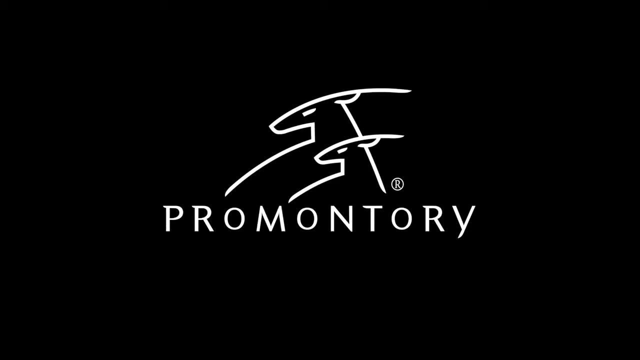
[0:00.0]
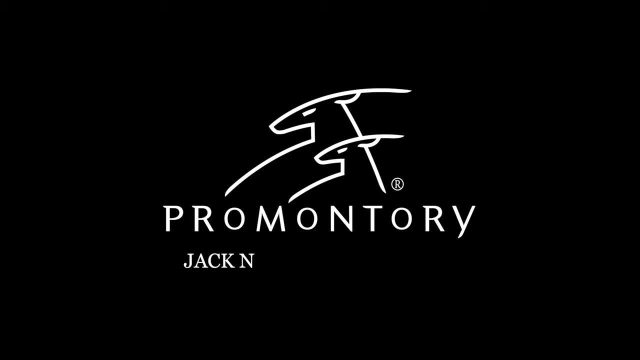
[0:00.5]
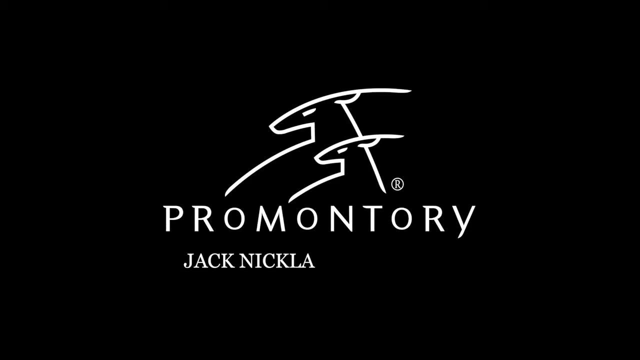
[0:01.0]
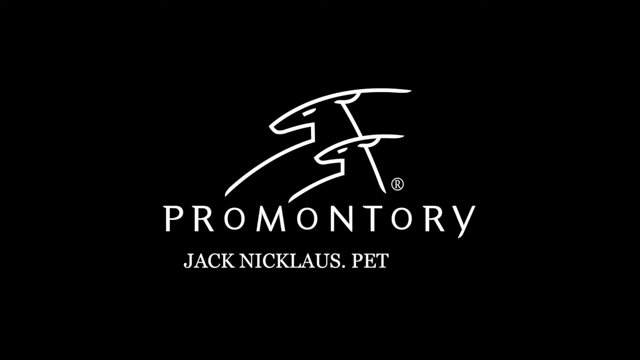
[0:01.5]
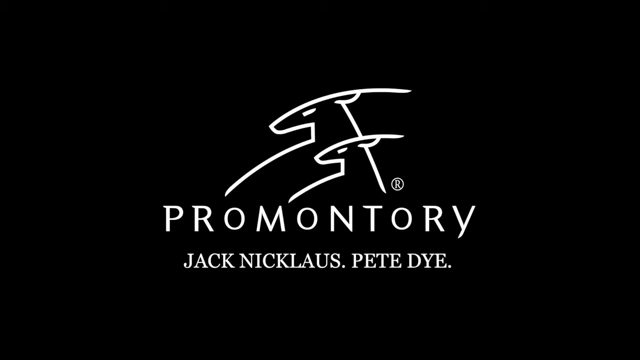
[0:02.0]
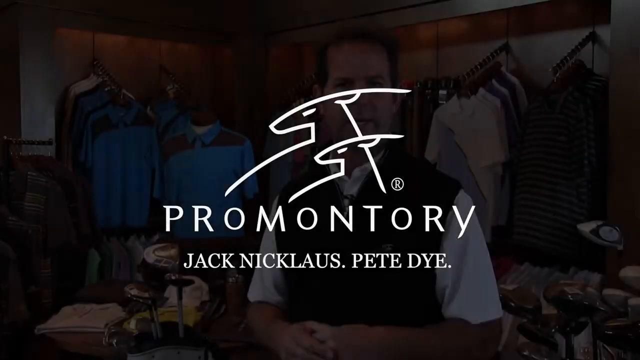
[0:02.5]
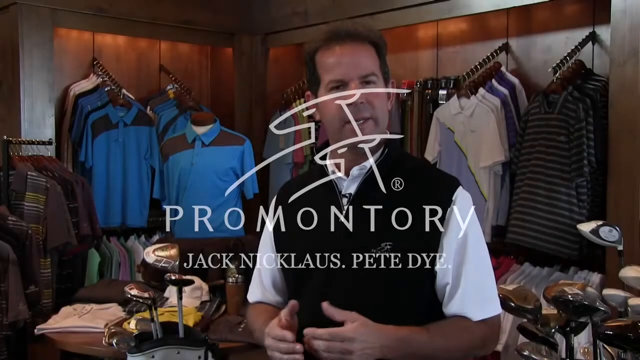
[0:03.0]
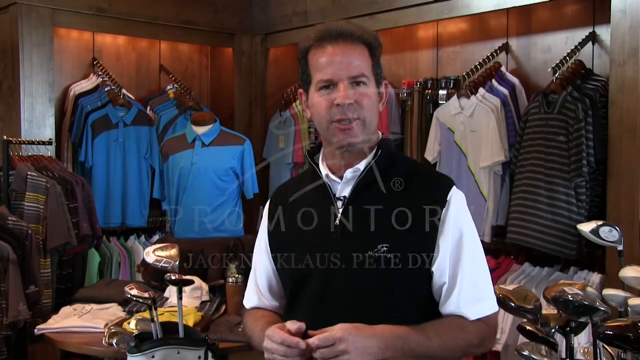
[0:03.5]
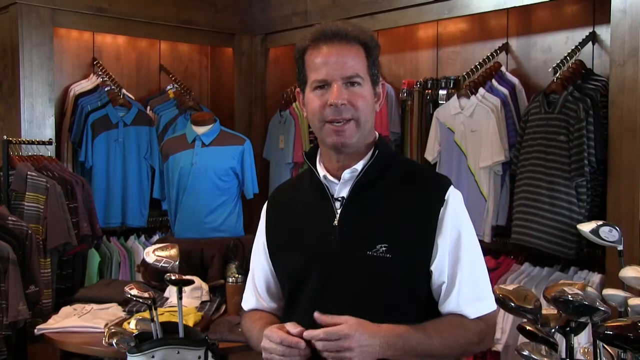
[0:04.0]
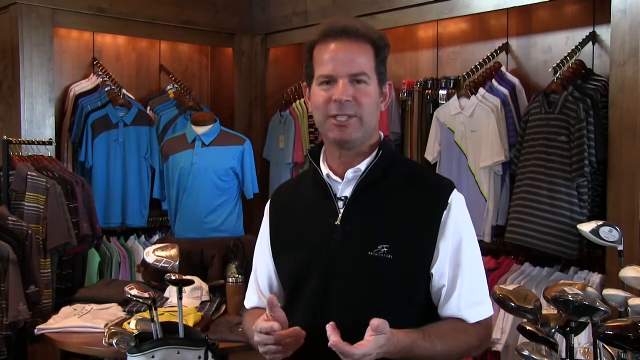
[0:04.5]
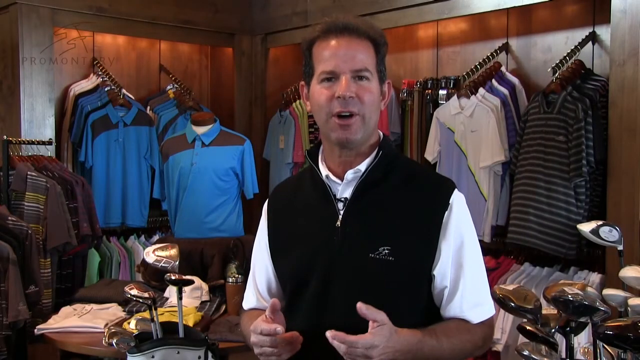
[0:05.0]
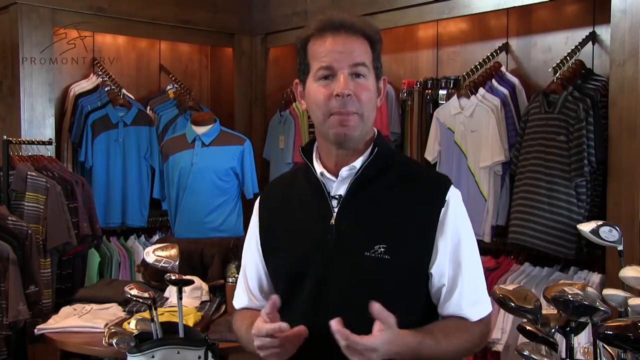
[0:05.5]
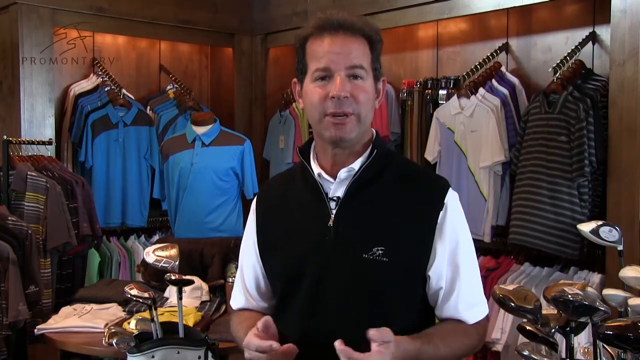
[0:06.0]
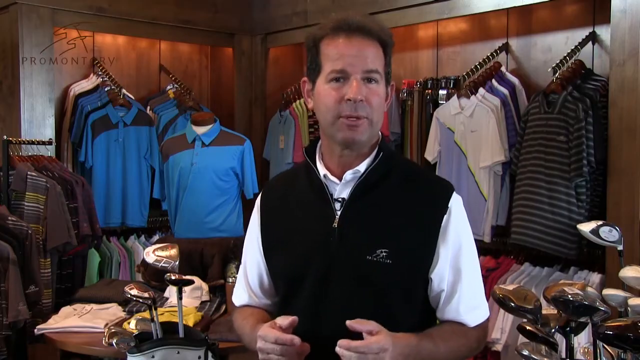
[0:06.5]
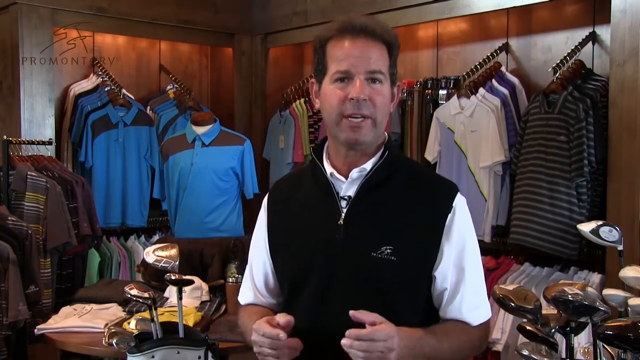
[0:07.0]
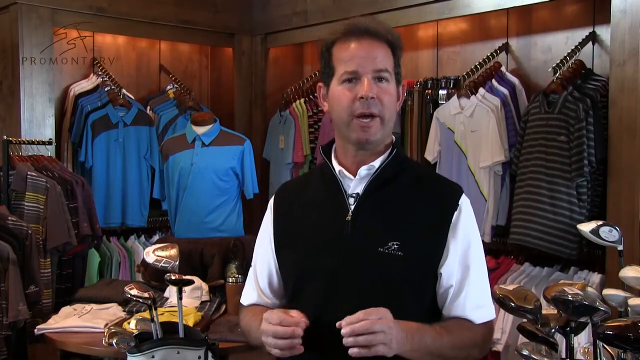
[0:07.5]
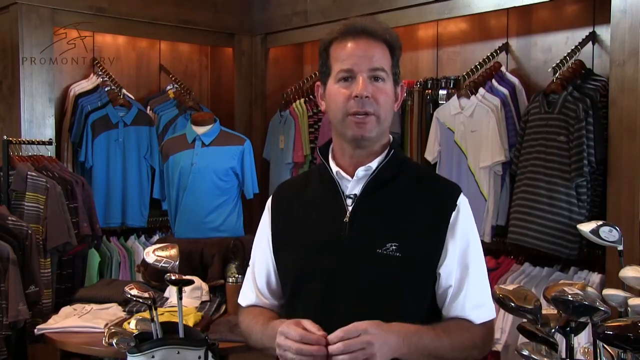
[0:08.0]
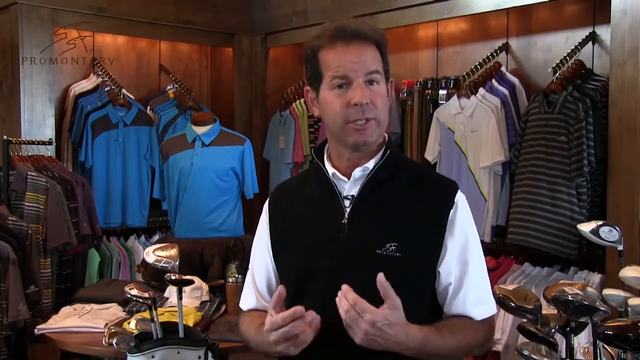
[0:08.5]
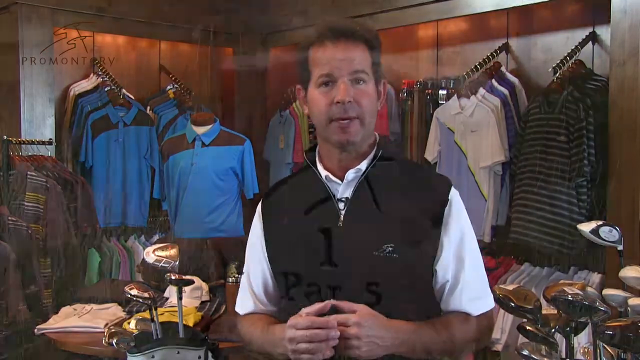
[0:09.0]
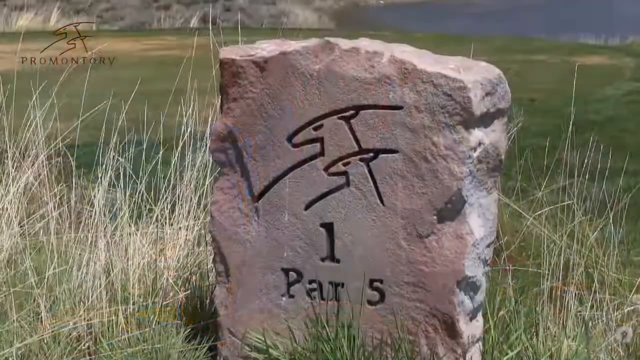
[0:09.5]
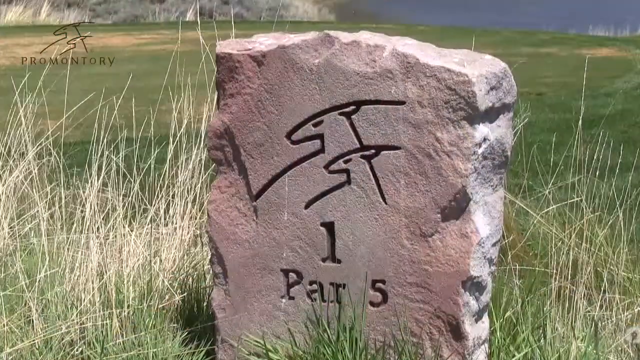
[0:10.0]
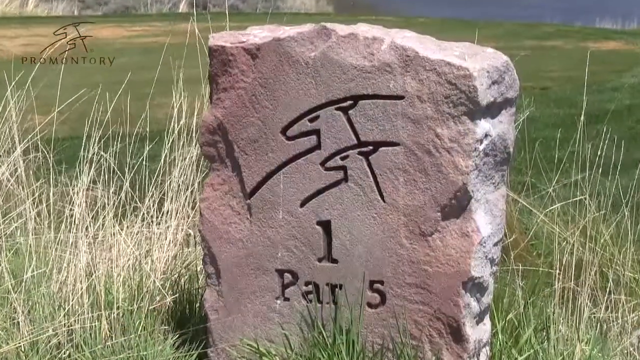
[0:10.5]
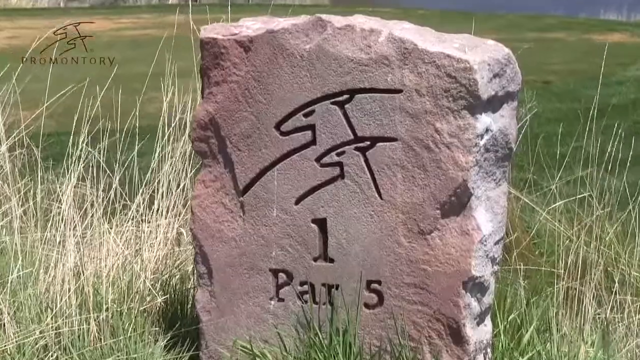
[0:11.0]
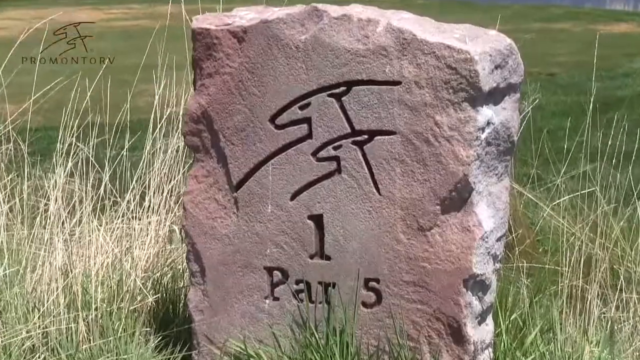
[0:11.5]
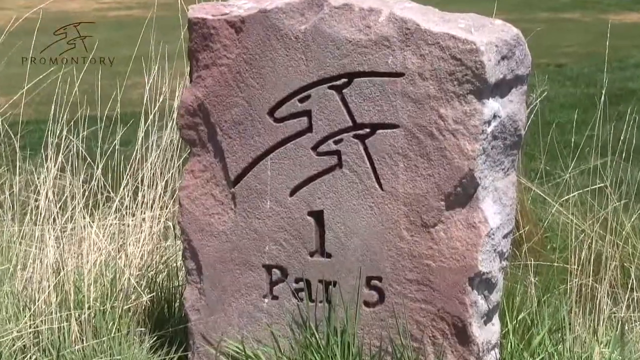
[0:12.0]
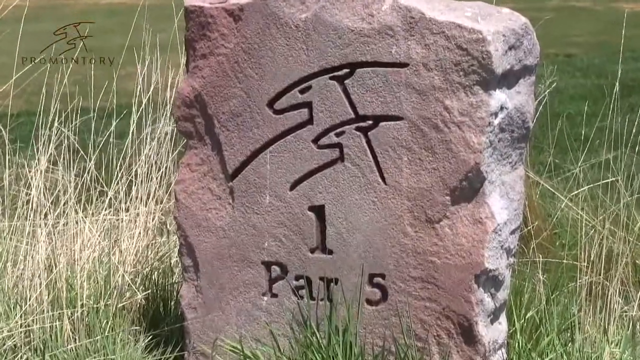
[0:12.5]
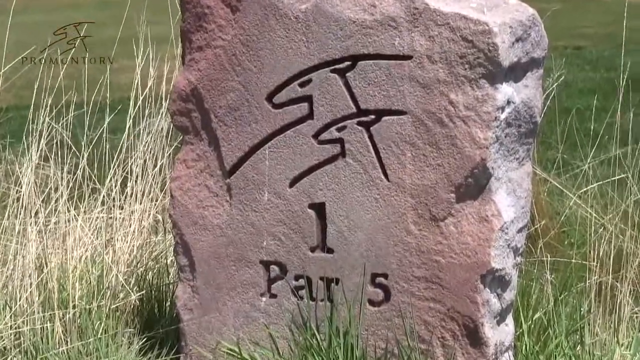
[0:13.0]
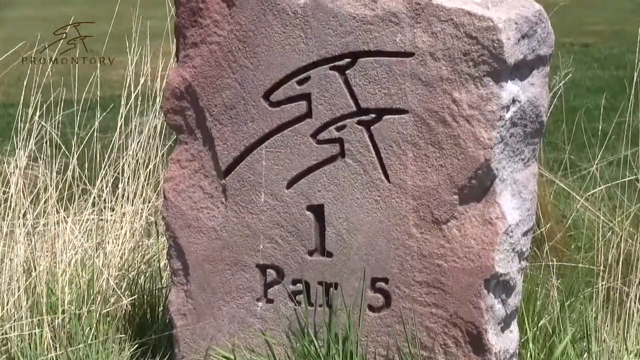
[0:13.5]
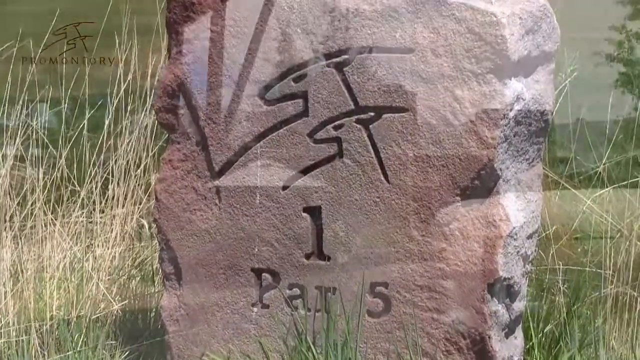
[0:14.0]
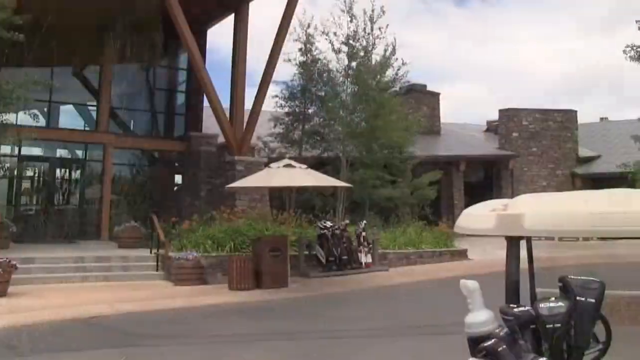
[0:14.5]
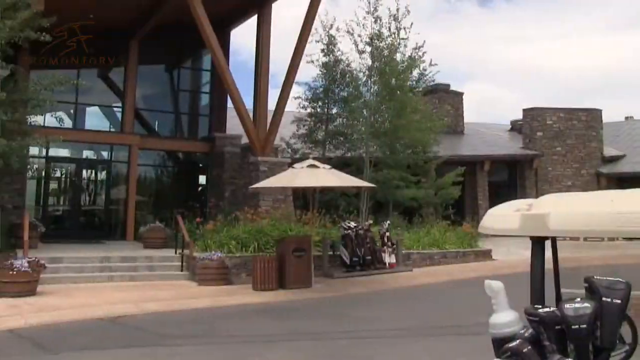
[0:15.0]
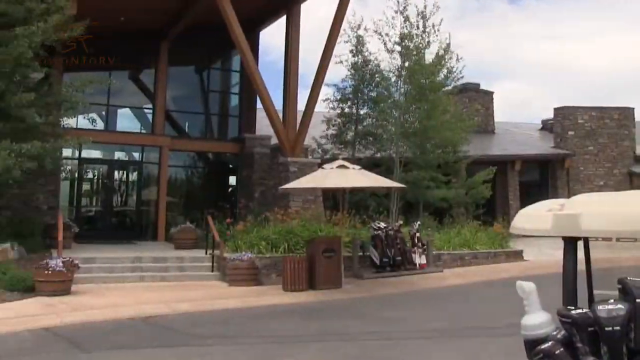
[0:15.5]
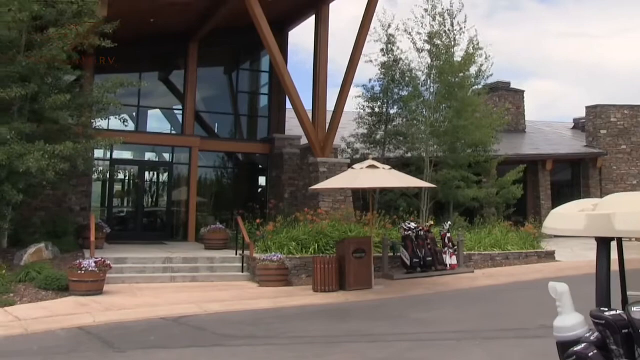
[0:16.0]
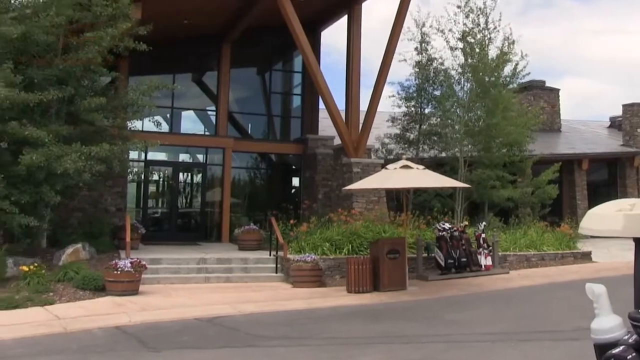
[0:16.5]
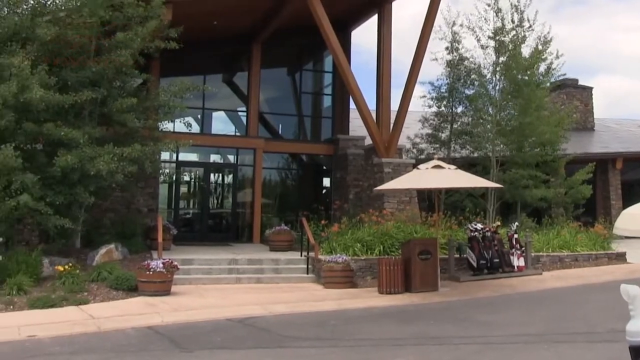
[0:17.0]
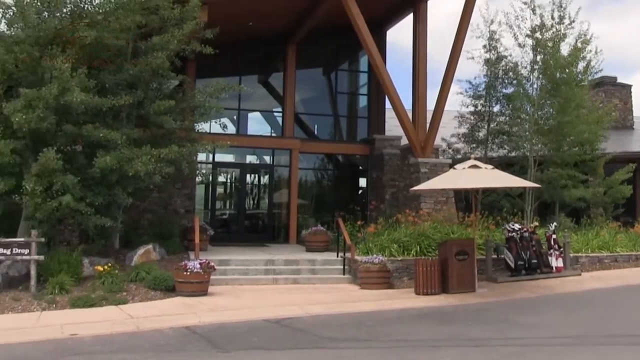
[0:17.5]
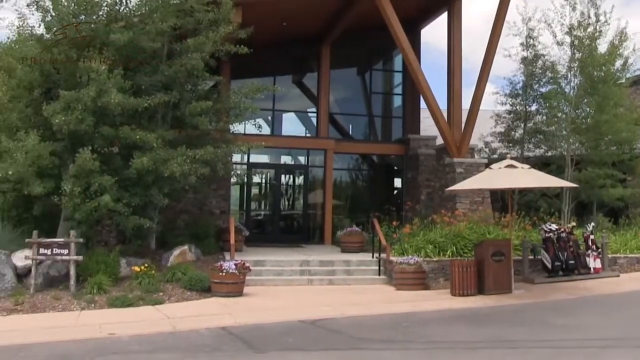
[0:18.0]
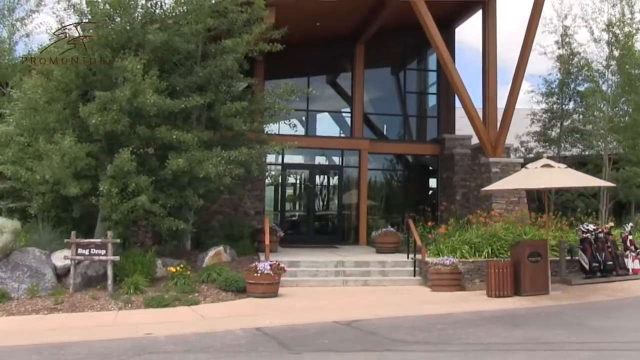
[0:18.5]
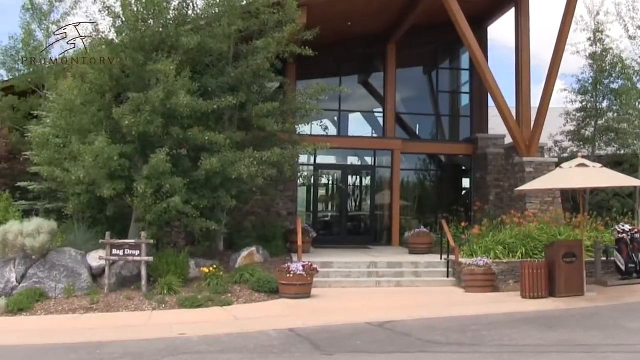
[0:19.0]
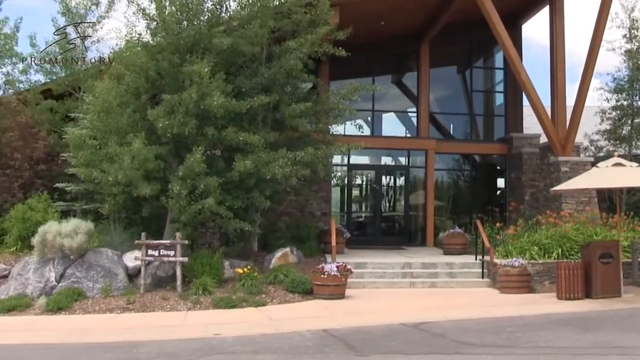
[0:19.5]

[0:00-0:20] A black screen shows white words: "Promontory", followed by the names "JACK NICKLAUS" and "PETE DYE" in all caps, along with white sketched images of what are perhaps two mountain goats. Next, a man stands in what looks to be a golf gift shop. He is Caucasian and wears a black vest and a white shirt. Behind him are neatly arranged golf polos: some blue, some white and purple, and some with black and white stripes. They are lit gently from lighting above and are against a white wall that almost looks like wooden paneling, though it is apparently the golden colors that make the wall look wooden. The man gestures, chatting with his hands. A stone structure labeled "1 par 5" is against the golf course, with tall grasses around it gently blowing in the wind and green grass in the distance. The camera then pans left through a building with a modernistic style, with large wood structures holding up the roof, lots of green foliage around it, an umbrella near where people store their golf bags, pavement, and cement steps that look tidy and clean.